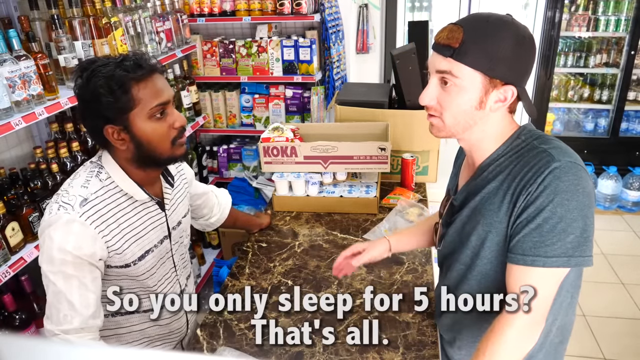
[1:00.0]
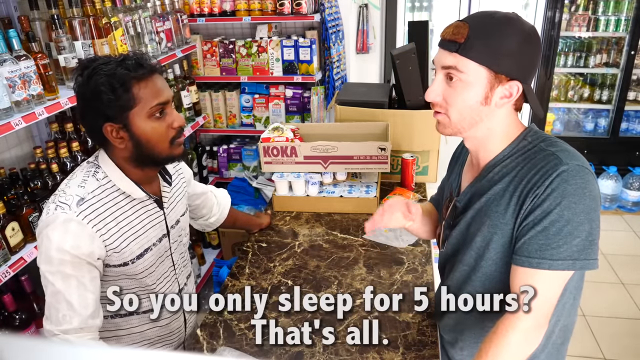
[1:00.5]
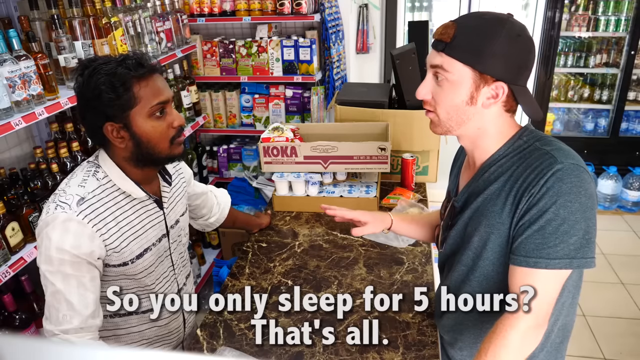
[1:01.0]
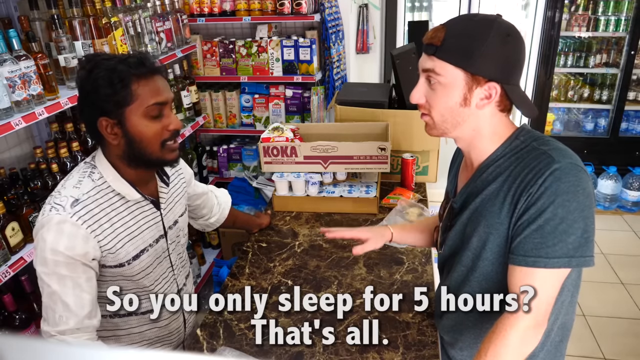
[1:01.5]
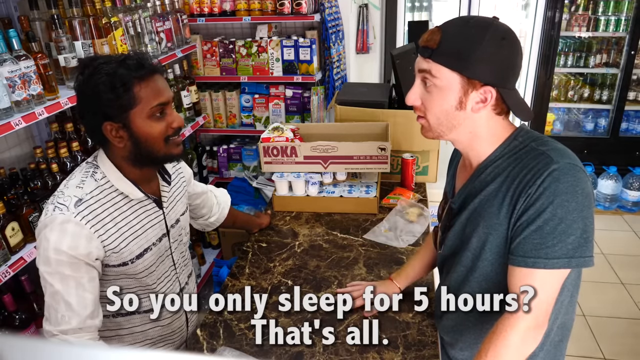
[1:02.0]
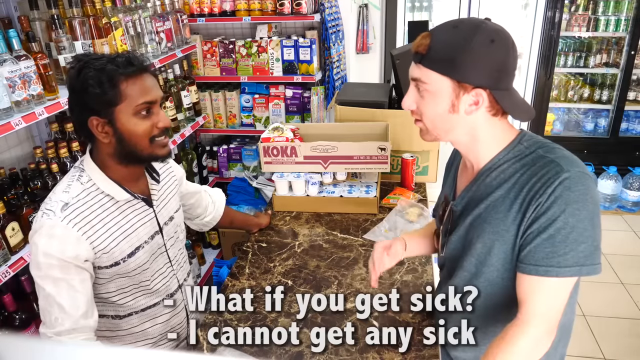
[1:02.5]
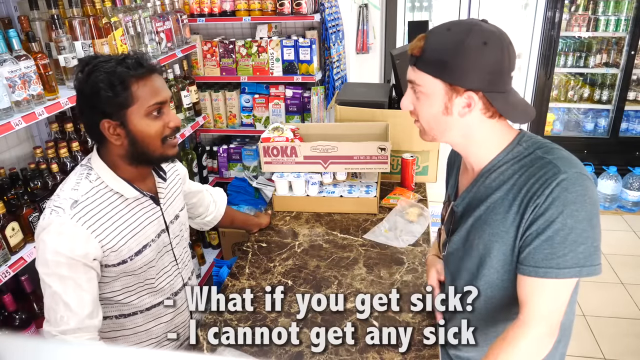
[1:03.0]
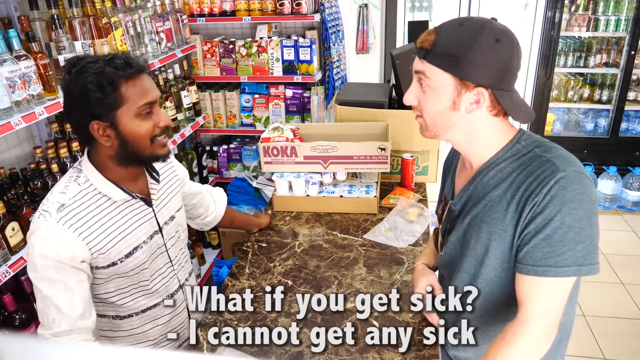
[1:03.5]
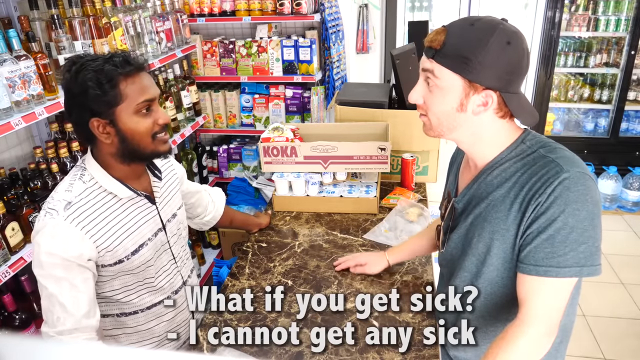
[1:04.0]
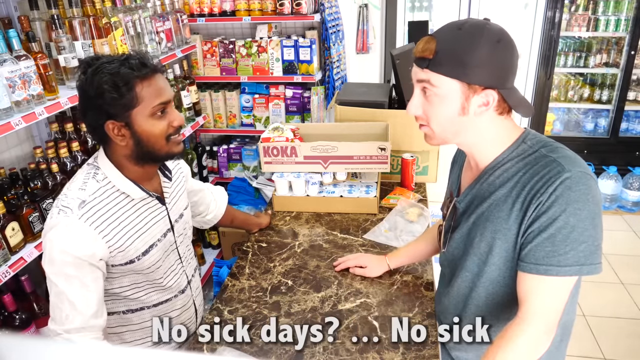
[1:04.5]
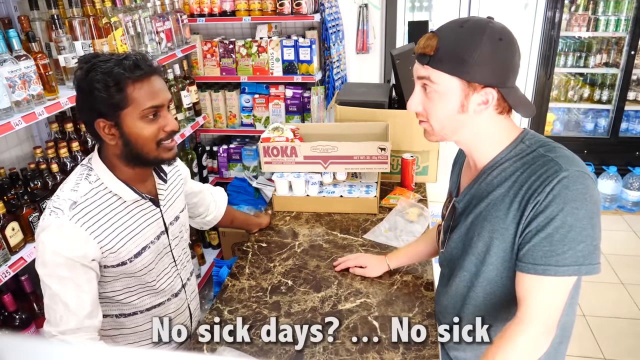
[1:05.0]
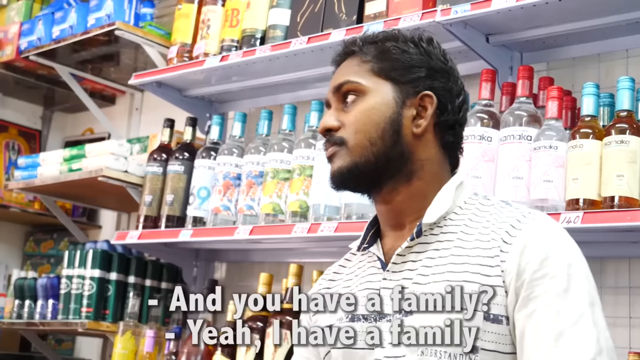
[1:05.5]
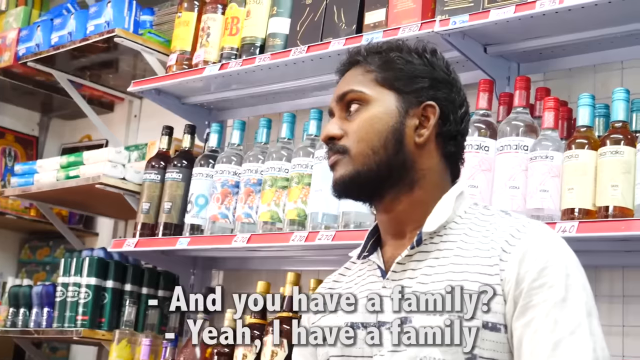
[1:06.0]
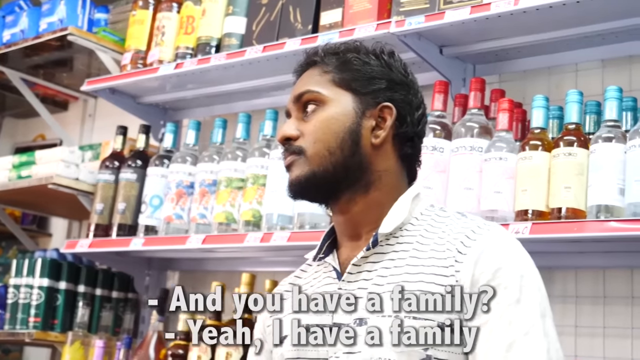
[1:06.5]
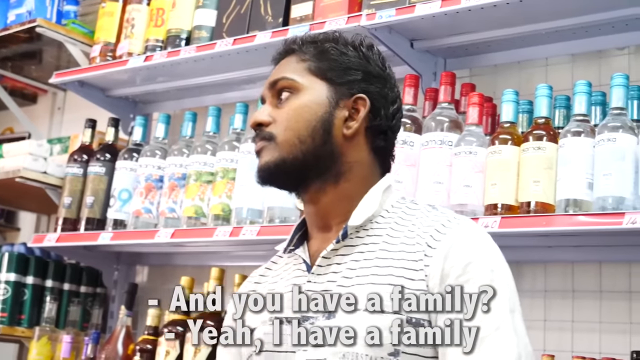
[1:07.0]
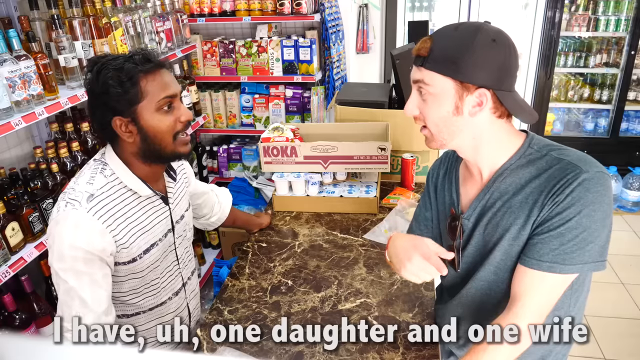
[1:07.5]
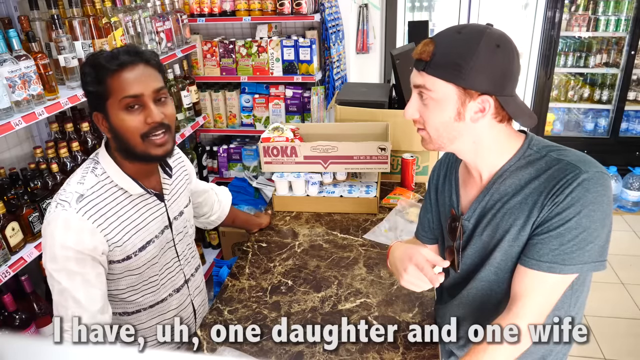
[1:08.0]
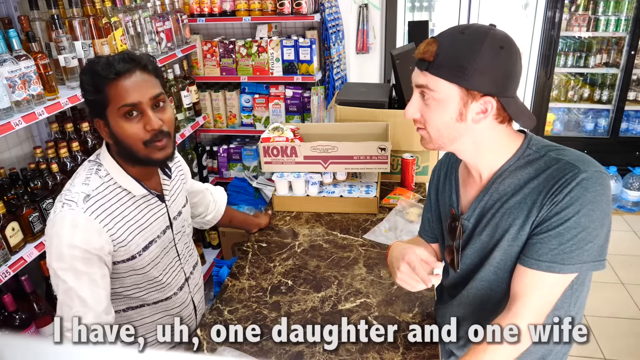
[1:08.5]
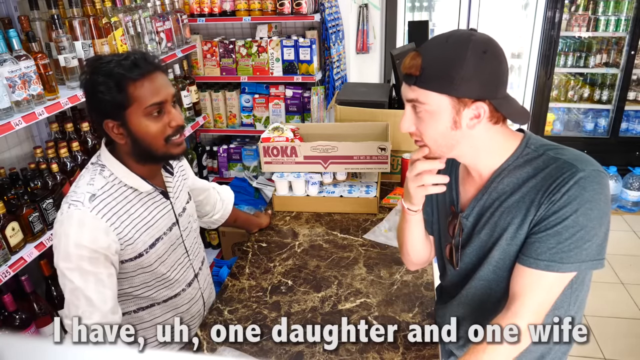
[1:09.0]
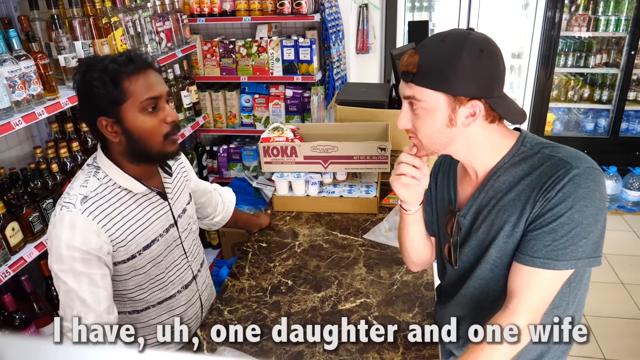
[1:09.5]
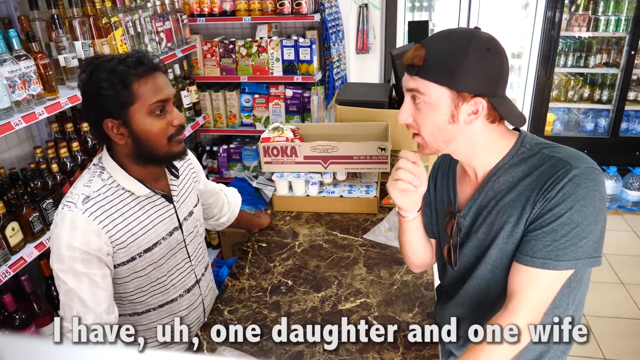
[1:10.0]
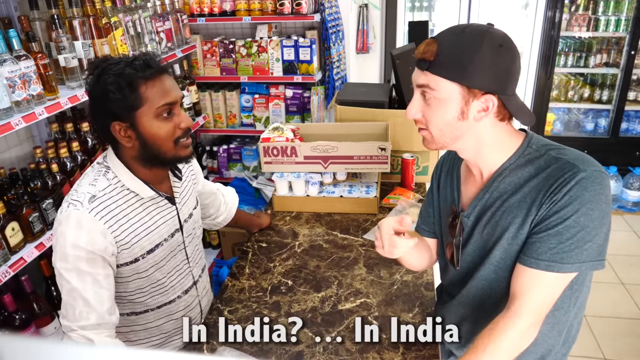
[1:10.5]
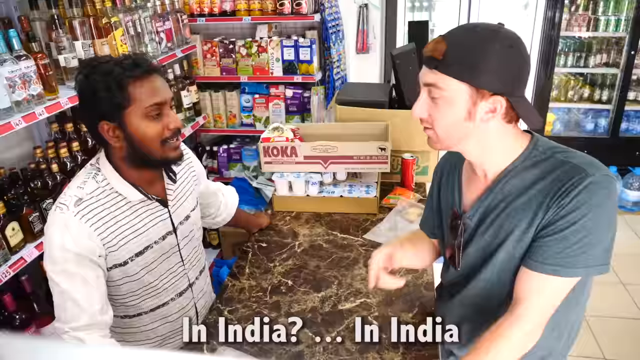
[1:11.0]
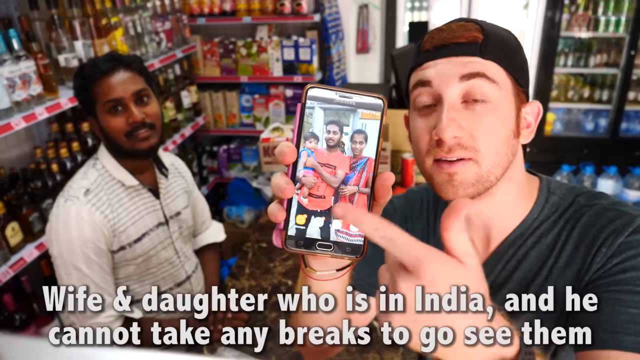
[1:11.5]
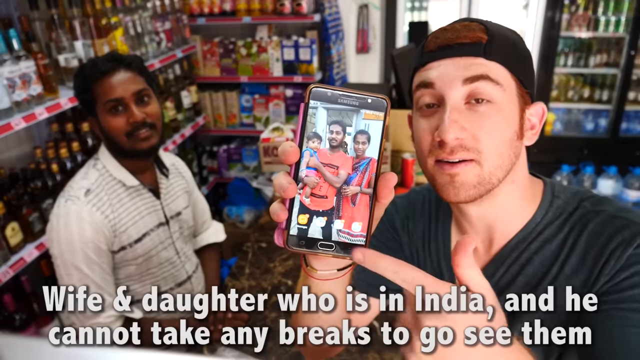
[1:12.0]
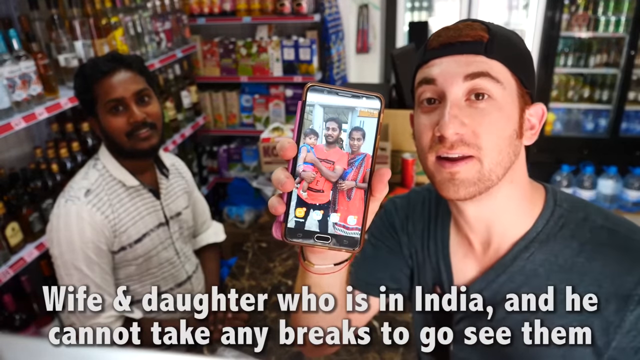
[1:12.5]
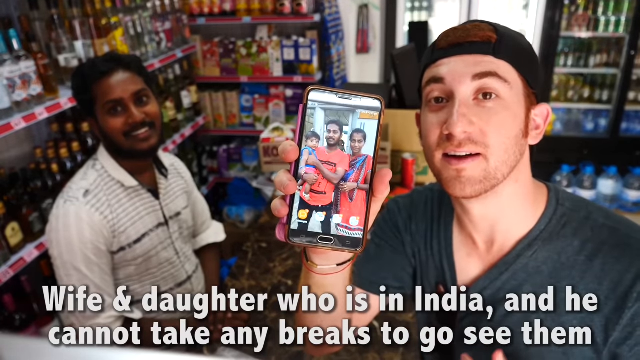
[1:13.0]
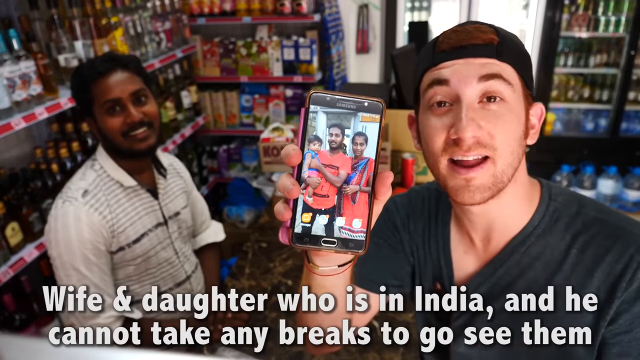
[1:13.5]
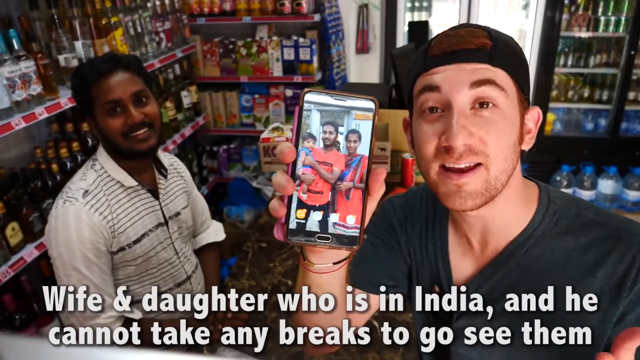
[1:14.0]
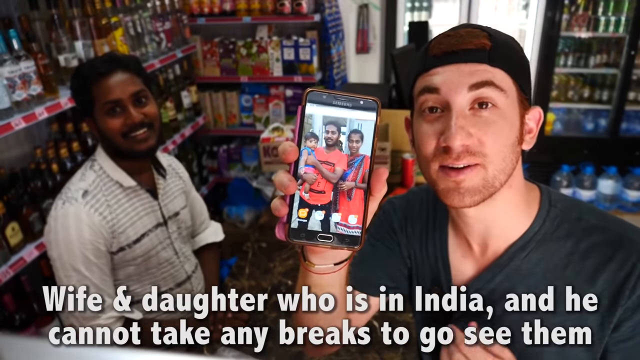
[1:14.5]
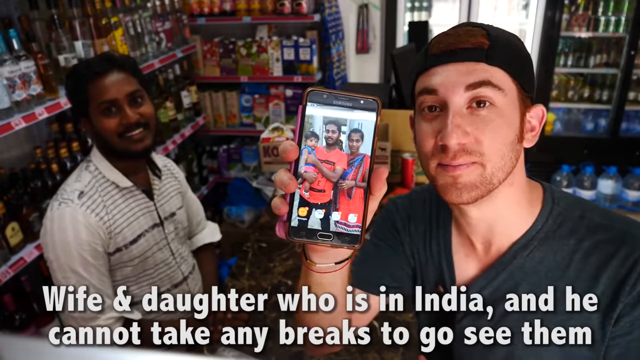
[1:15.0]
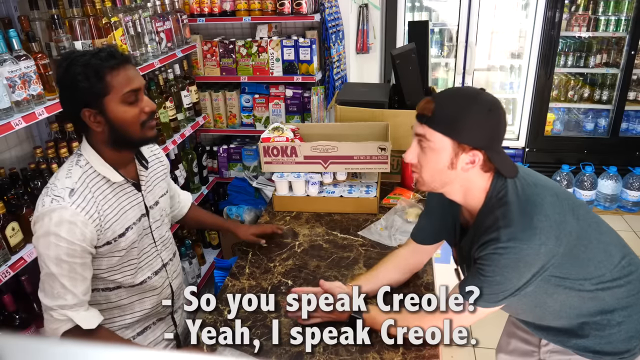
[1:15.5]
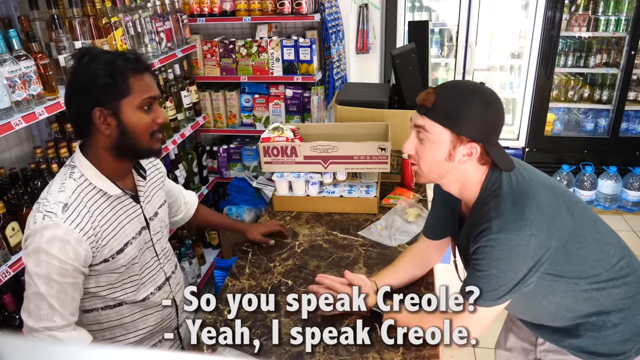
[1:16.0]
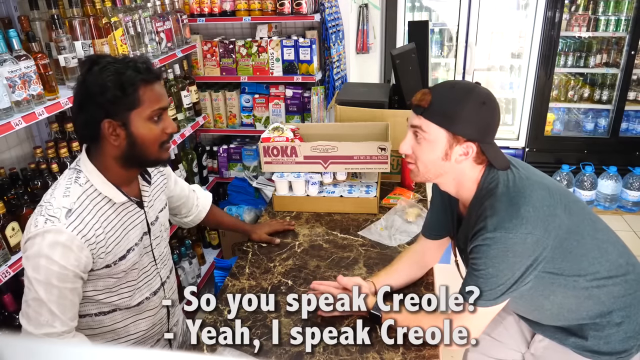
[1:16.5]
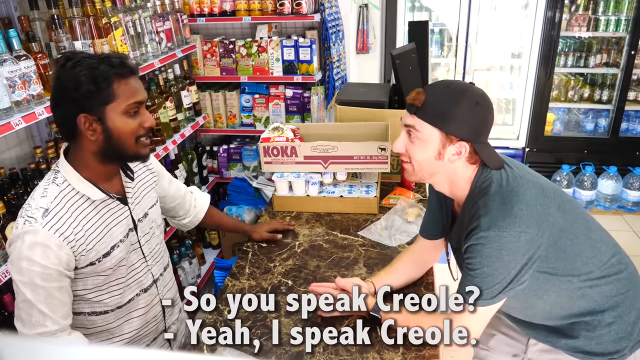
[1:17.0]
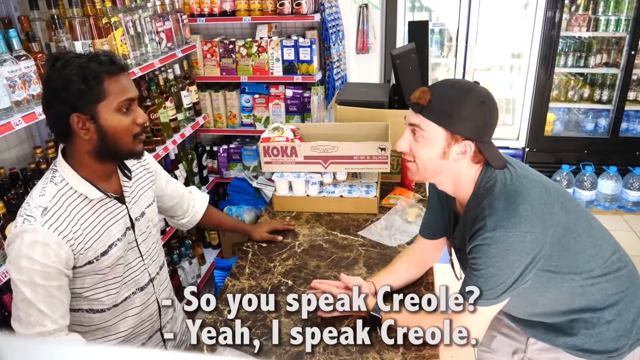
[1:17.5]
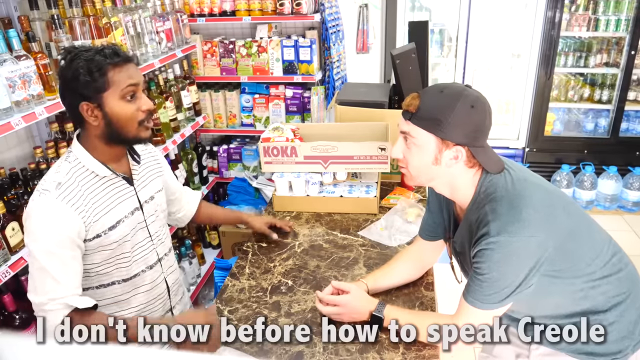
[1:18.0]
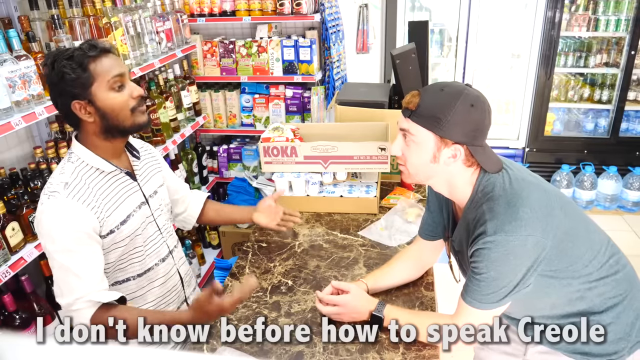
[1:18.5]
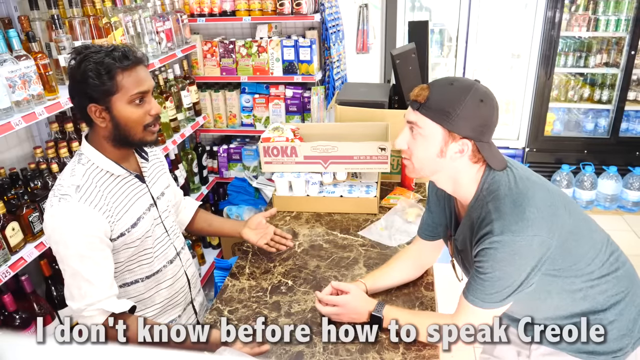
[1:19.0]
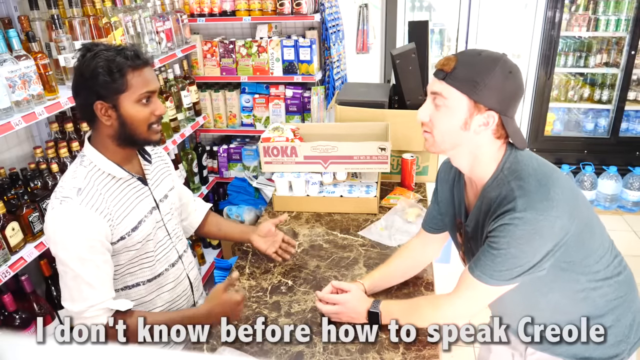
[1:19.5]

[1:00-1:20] The handsome Indian man and the handsome white man keep talking while standing. The Indian man, the shop owner, stands at the counter while being interviewed about how he manages his shop and how long he works each week; he says he works every day, Monday to Sunday, from 6 am to 10 or 11 pm. Asked what would happen to his store if he got sick, he mentions that he has family who might help him, and a picture of his family is shown on a phone. His daughter and wife seem to be living in India. He also seems to be asked about the language he speaks, Creole, and he says he can speak Creole.